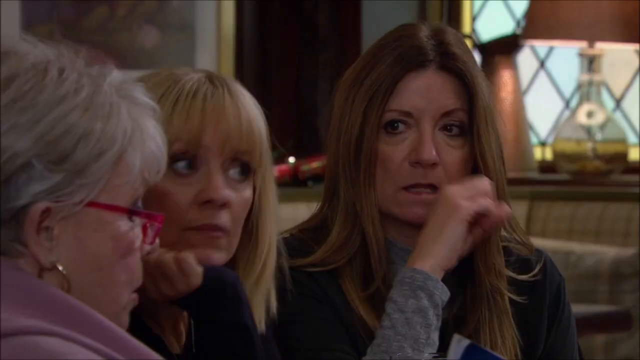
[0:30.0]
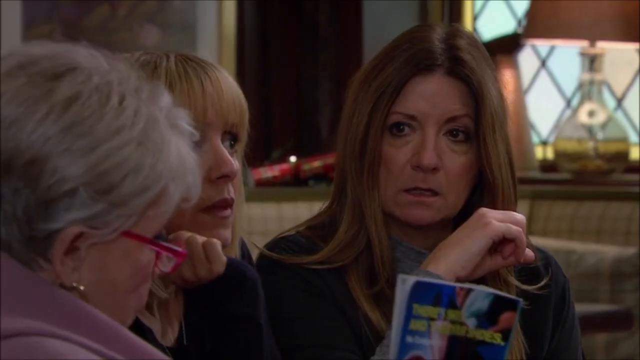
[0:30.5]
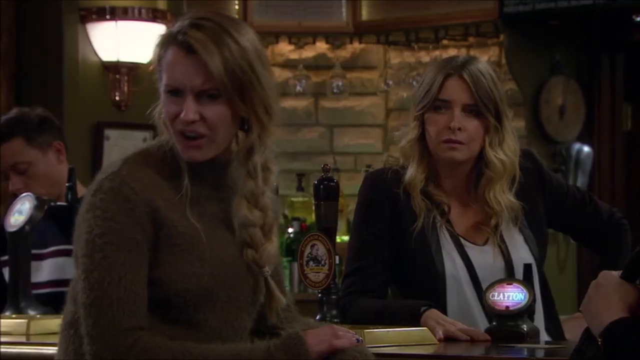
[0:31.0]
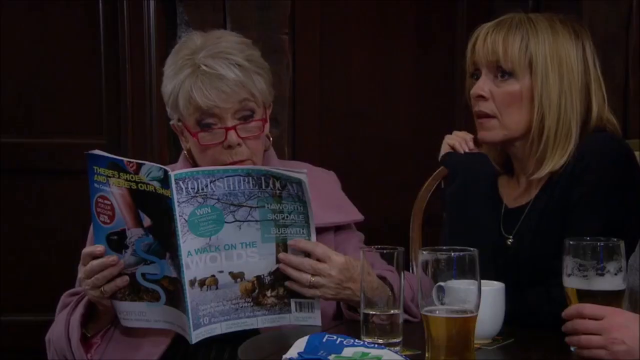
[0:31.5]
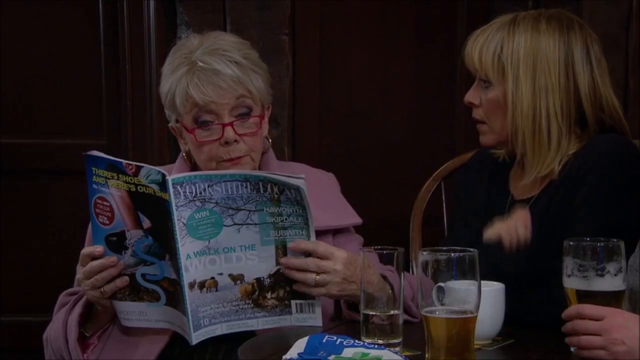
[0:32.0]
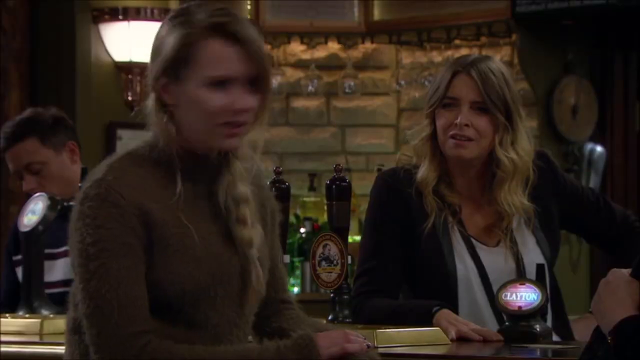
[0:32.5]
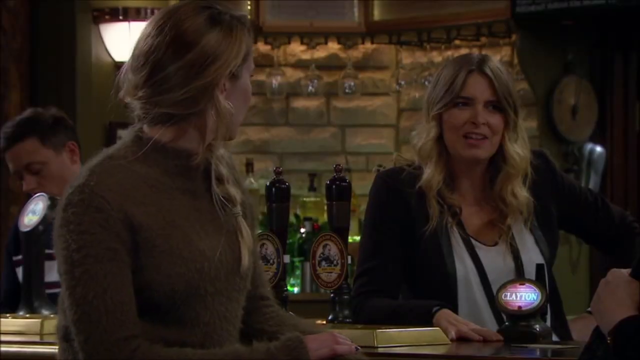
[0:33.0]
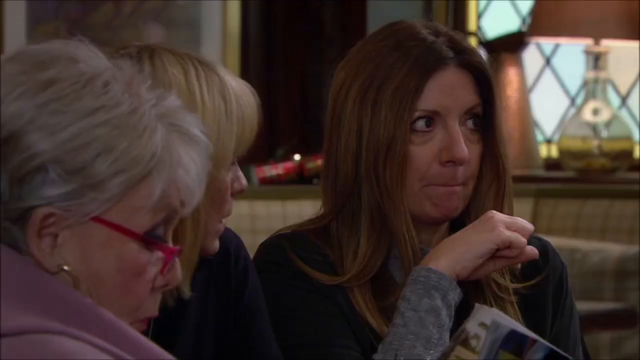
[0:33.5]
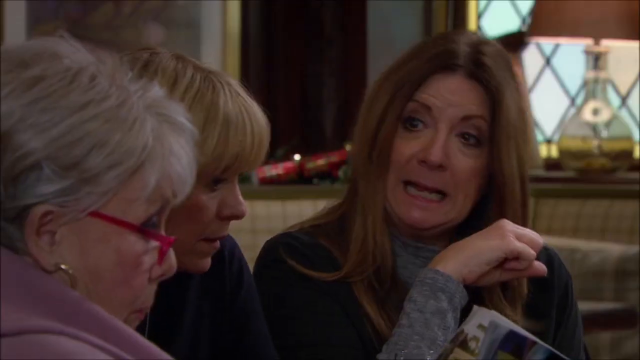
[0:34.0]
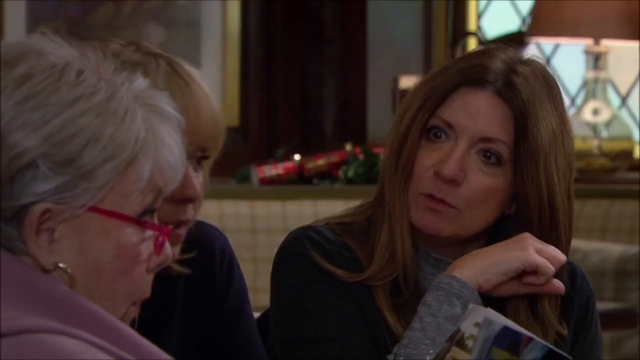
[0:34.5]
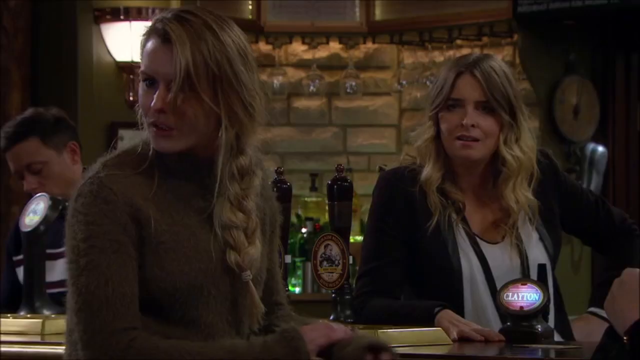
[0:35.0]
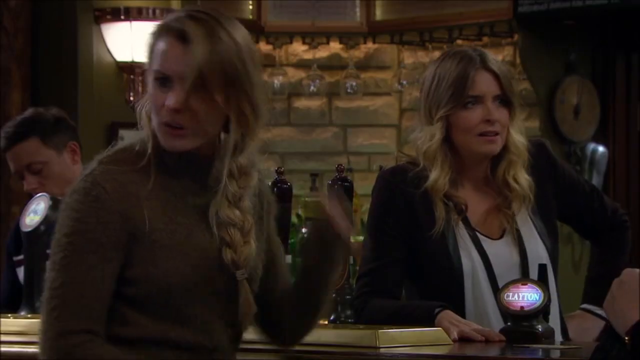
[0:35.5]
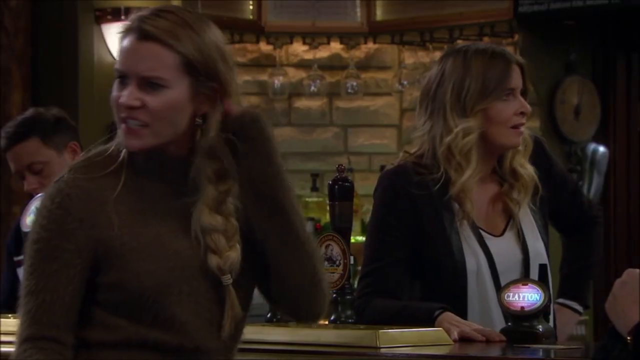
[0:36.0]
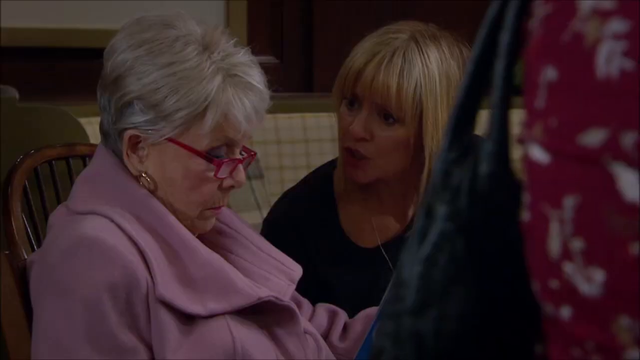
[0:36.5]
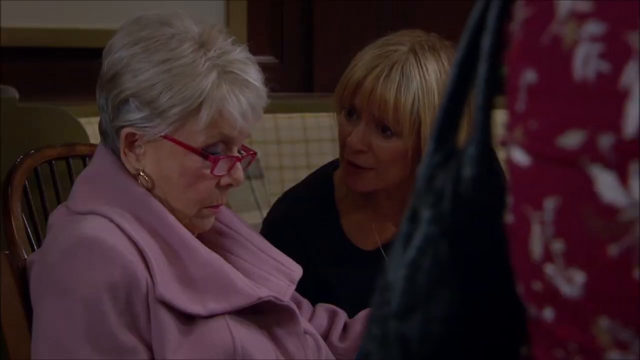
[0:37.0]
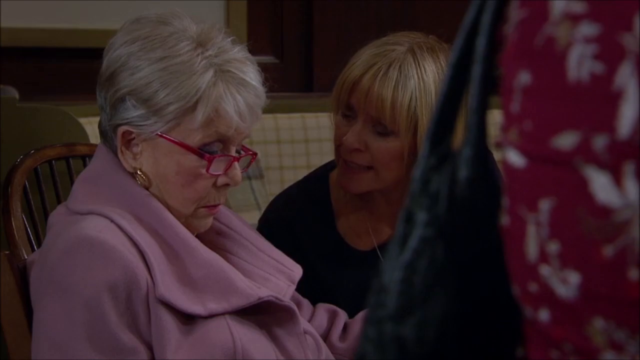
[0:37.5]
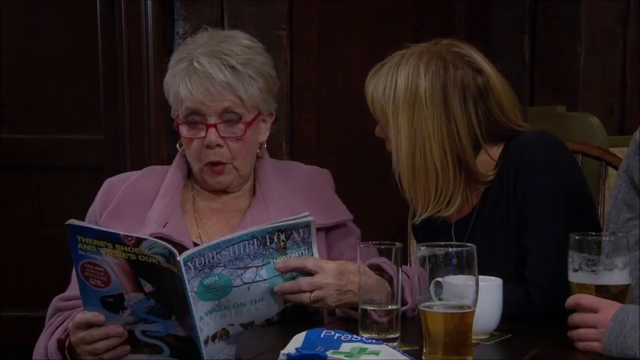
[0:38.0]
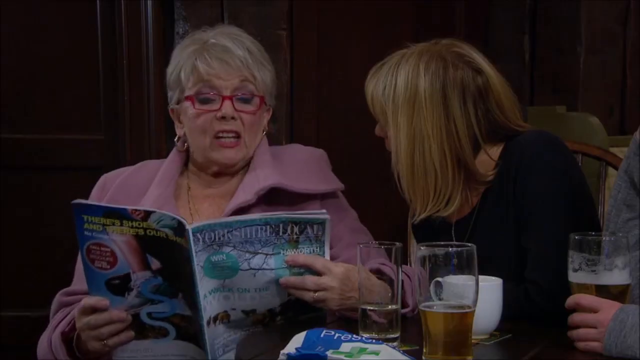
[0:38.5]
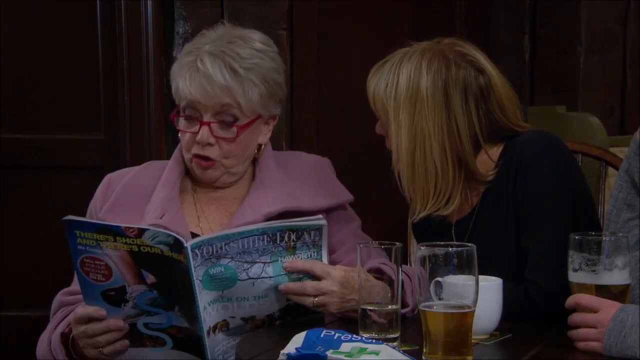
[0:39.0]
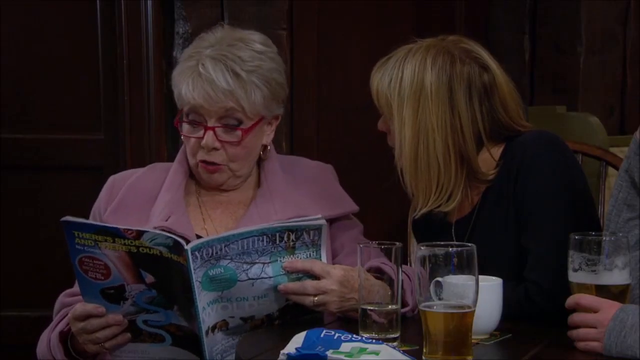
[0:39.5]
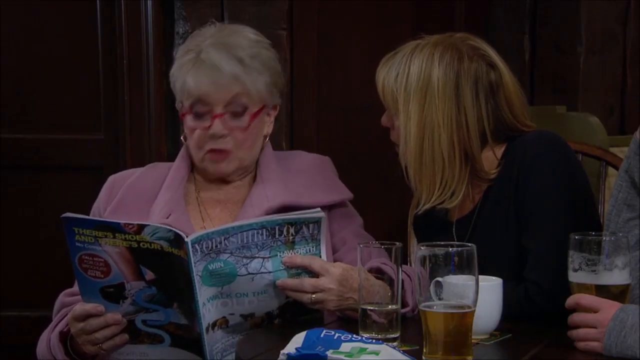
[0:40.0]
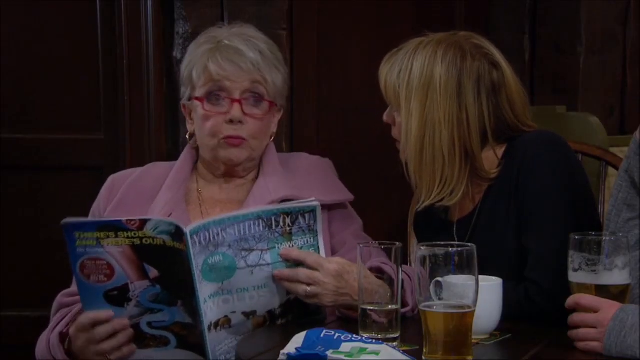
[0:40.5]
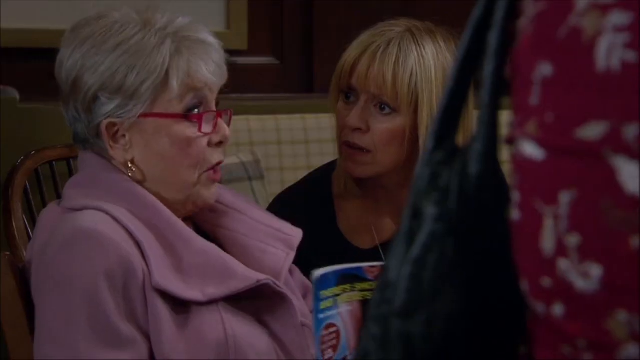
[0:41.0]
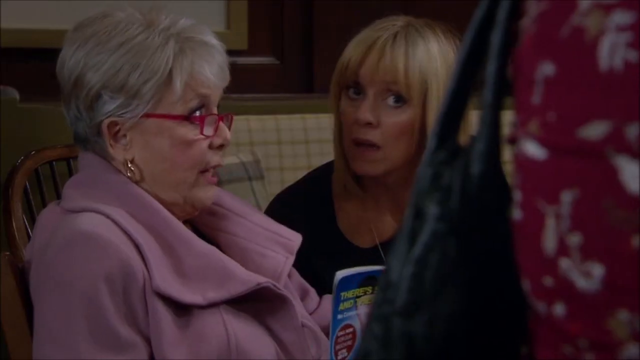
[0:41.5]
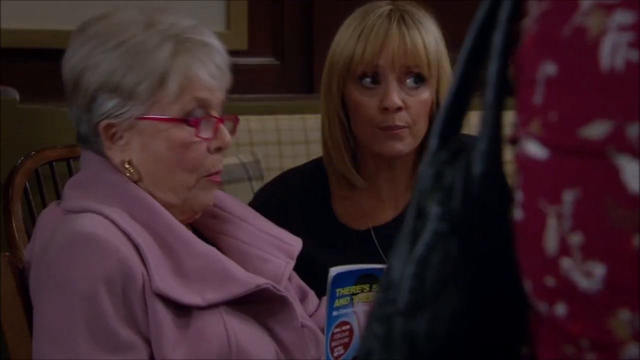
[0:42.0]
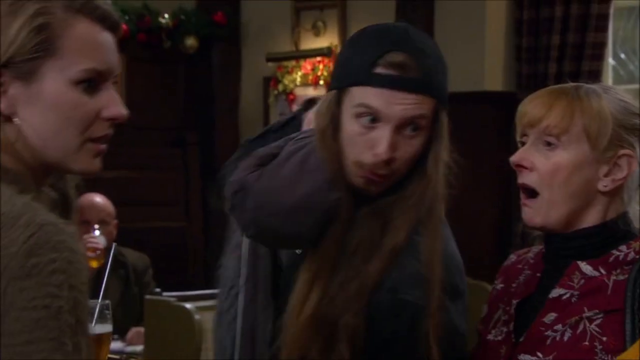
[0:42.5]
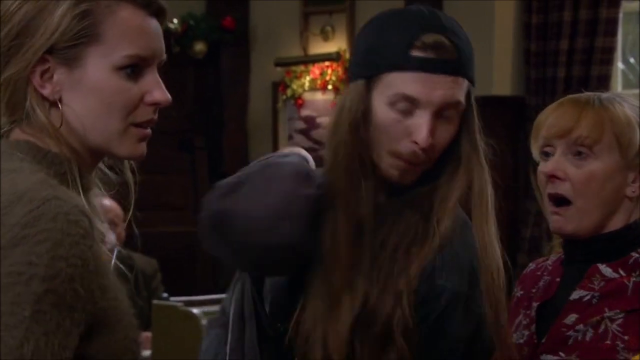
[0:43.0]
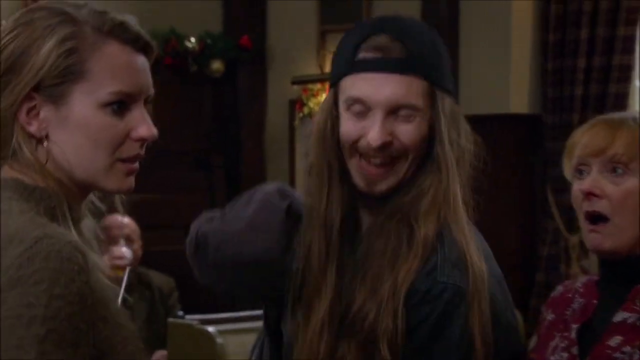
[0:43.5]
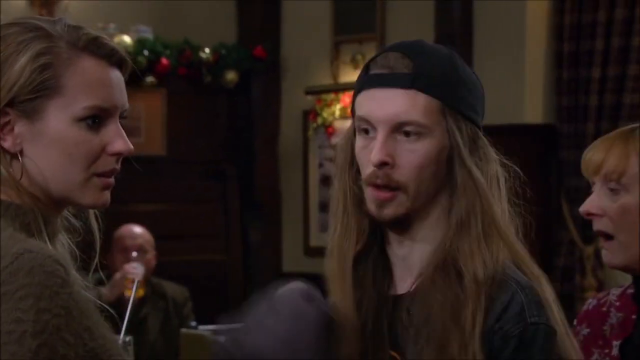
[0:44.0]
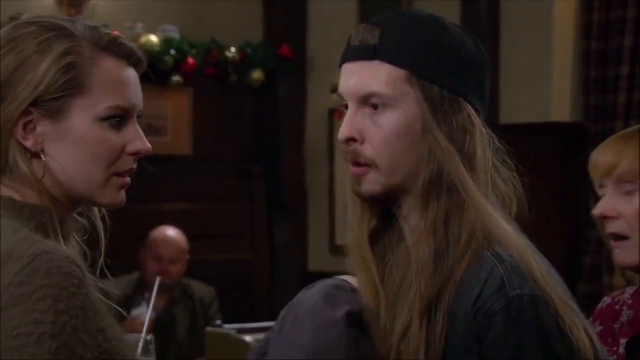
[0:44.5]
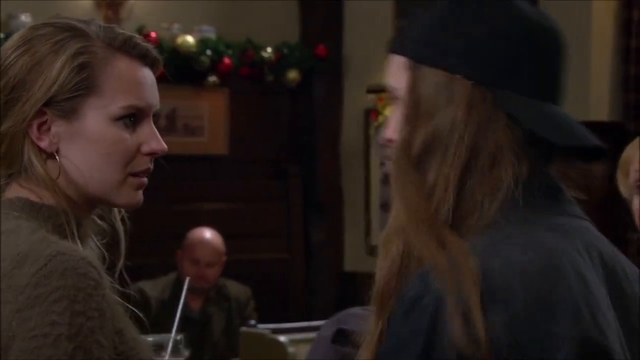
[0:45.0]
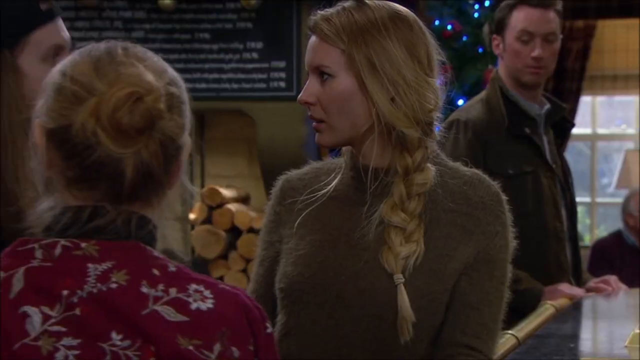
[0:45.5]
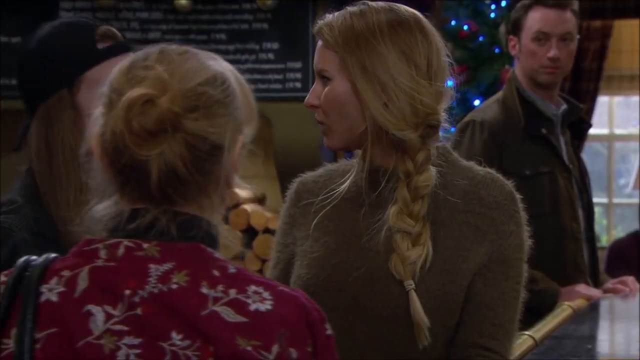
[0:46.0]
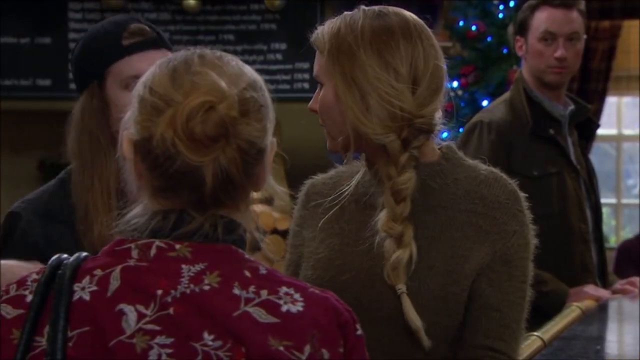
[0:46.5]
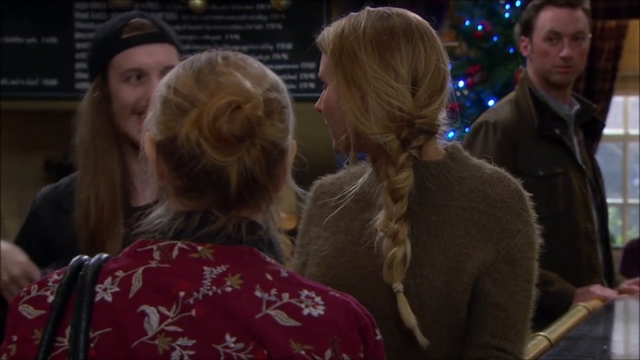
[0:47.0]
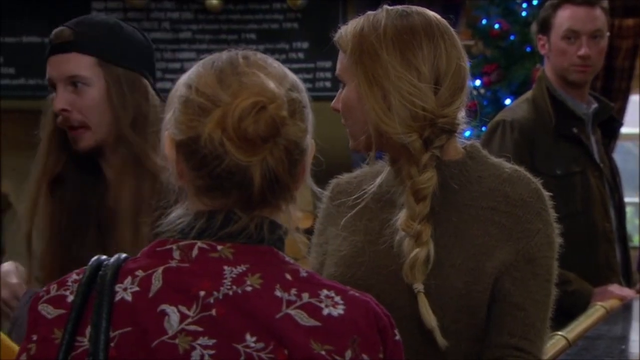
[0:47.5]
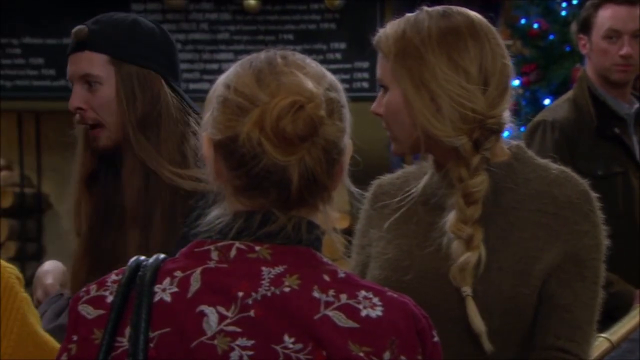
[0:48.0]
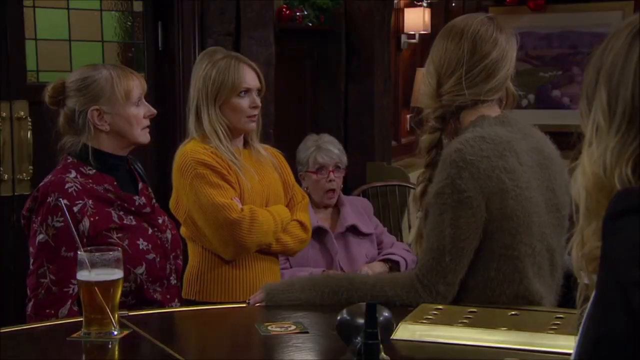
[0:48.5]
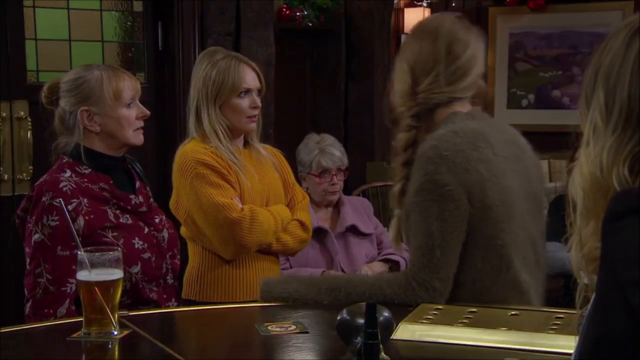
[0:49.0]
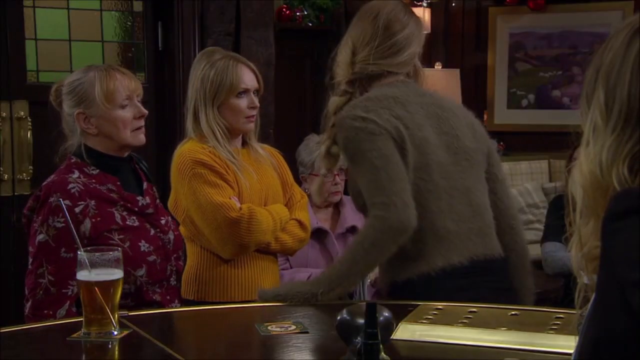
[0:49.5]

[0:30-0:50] Everyone seems to be upset. The older lady with the red glasses and pink jacket seems to have said something that upset the two older ladies she was with, as well as the bartender and the blonde lady with a braid and a brown sweatshirt at the bar. They have an intense conversation, while the older lady with the red glasses doesn't seem to care and keeps talking. Eventually the man with the long hair, the mustache and chin hair, and the black baseball cap leaves, which seems to upset the older lady; he is kind of laughing and saying goodbye. Everyone else has their arms crossed and is not happy. Christmas decorations, pictures and frames are in the background, along with background actors. The man who might have brought in the injured woman seems to be kind of listening to the conversation.